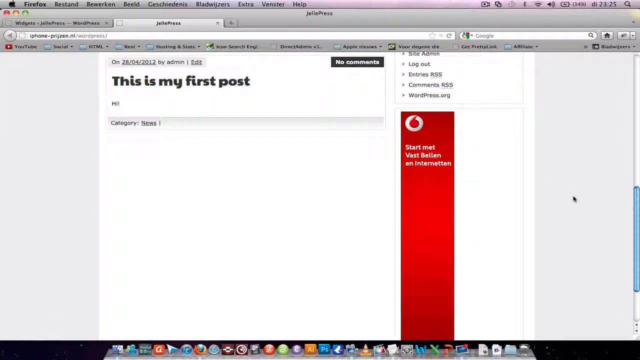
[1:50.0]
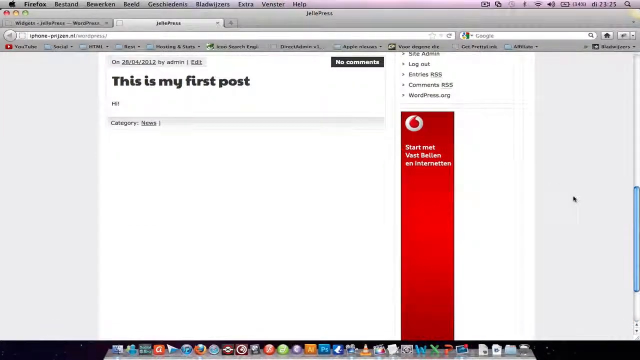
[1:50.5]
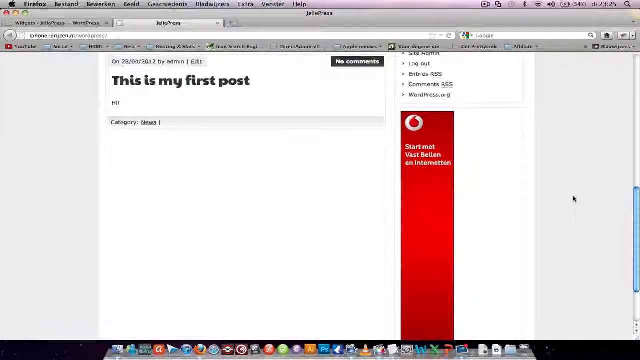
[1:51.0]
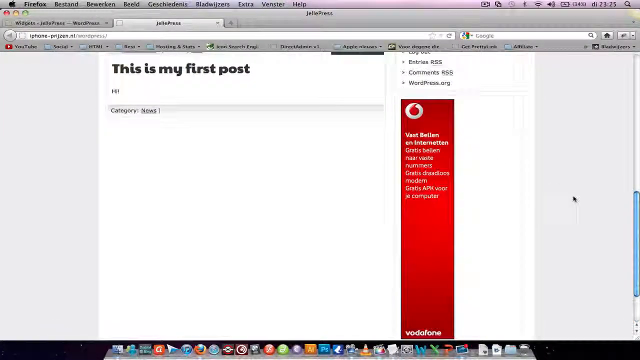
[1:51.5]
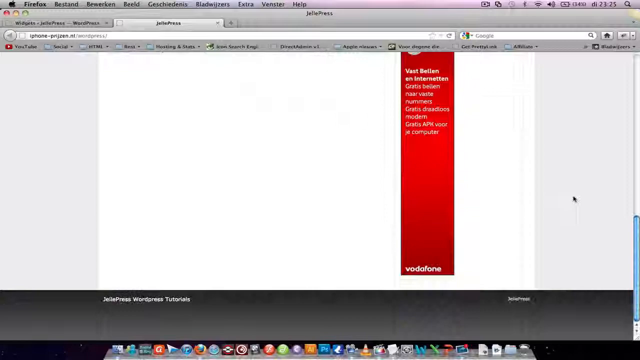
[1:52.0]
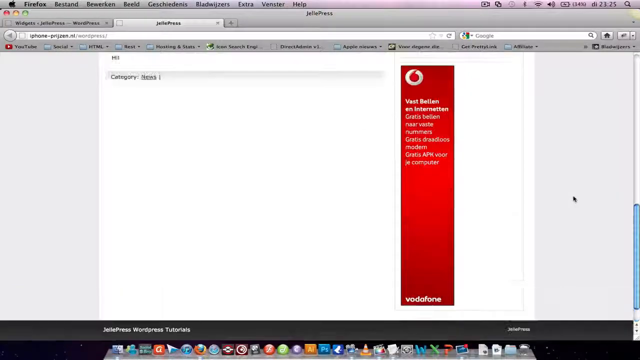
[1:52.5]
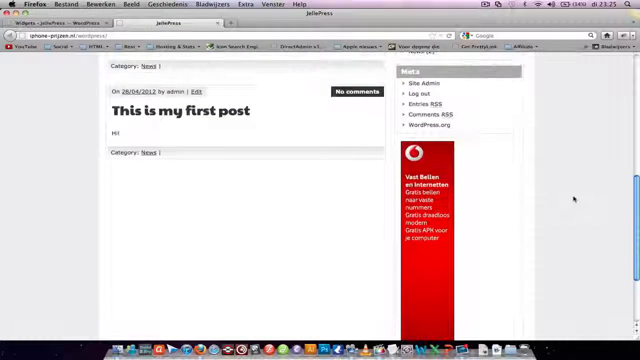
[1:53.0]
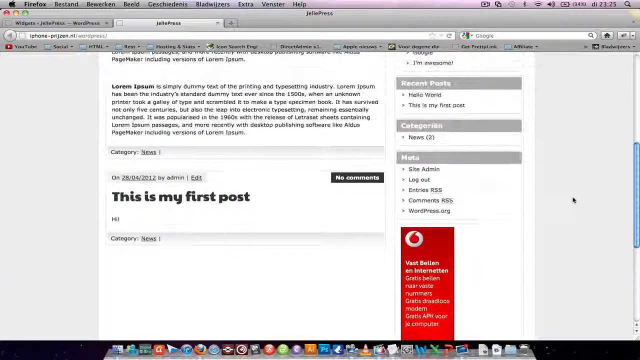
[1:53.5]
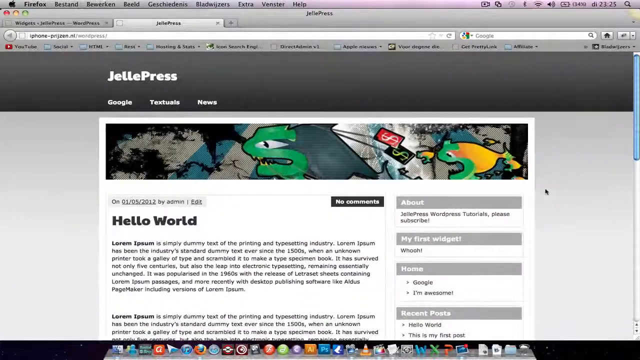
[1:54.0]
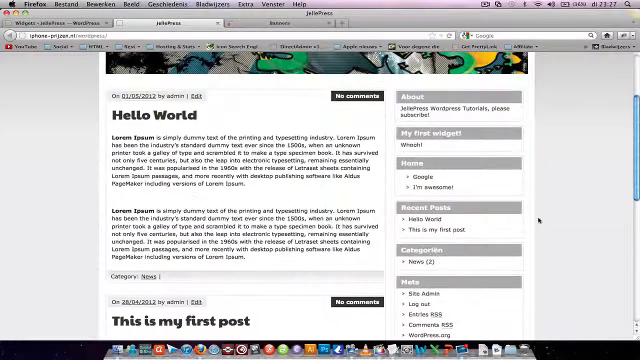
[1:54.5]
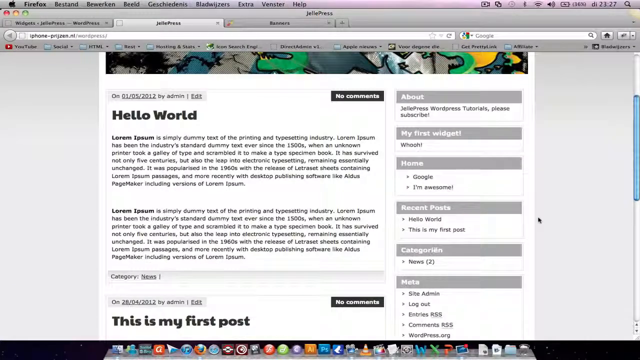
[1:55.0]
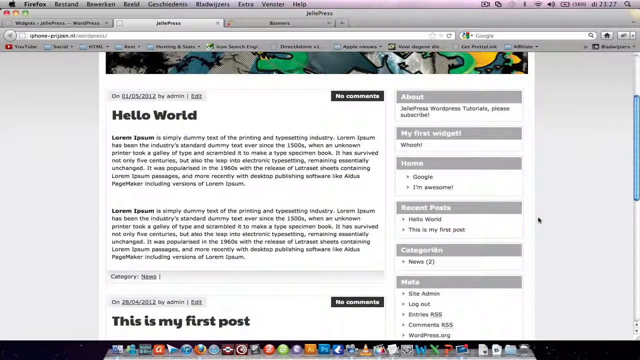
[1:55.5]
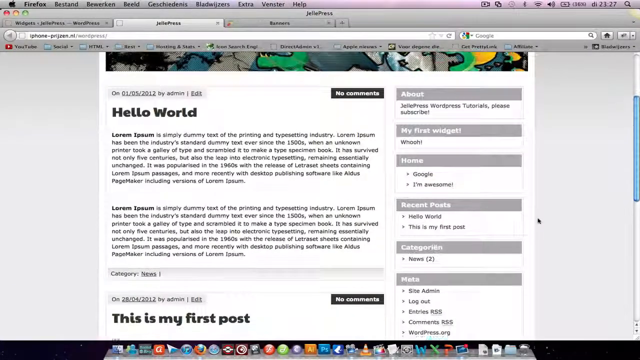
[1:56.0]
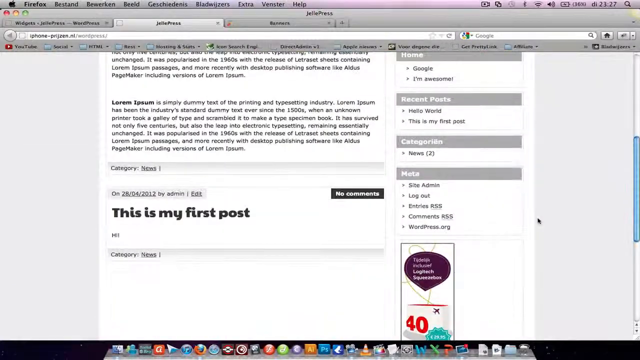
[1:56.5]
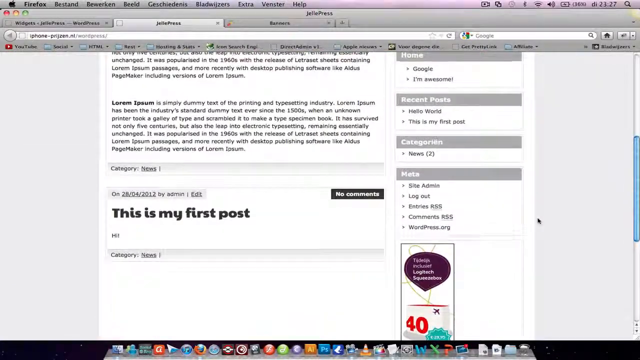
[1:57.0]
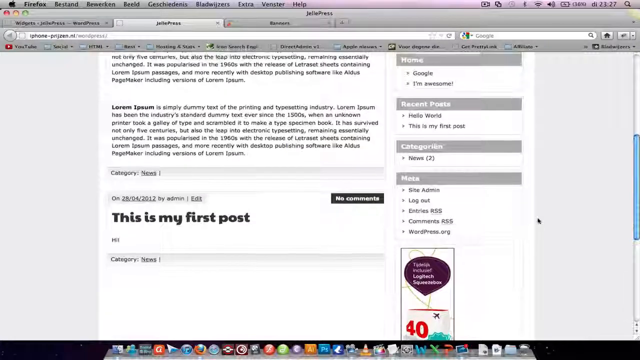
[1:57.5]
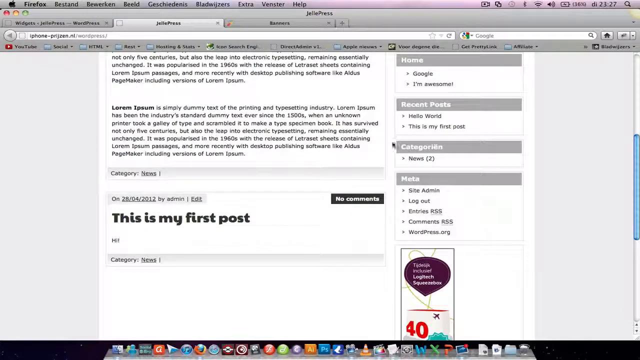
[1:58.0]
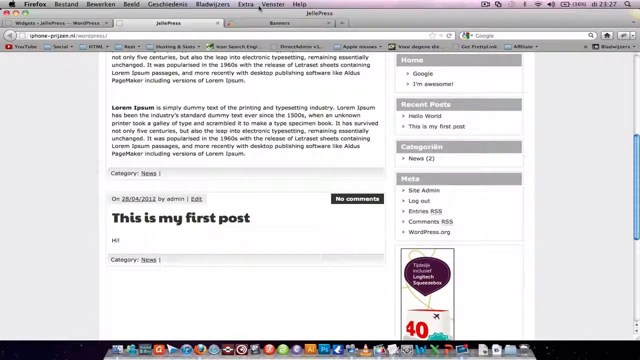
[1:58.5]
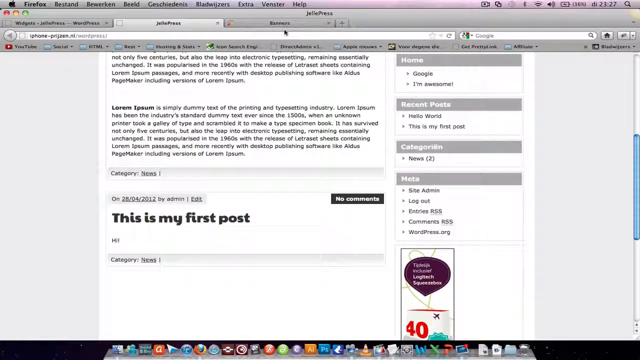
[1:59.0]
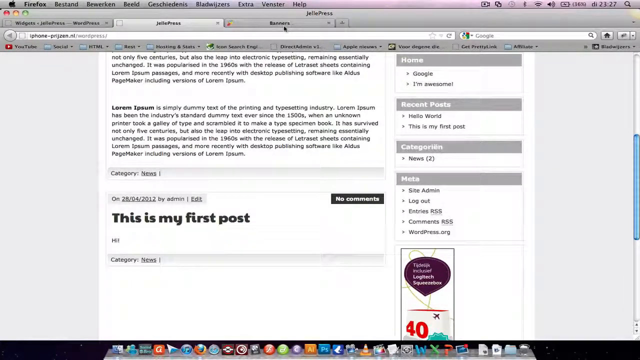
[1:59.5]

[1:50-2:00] The view goes up and down, exits WordPress, and goes to a new tab that says "banners"; how the banner page was created is not shown because the video skips over it. Besides the hello world message, the web page has sections on the side. About says "Jelle Press, WordPress tutorials, please subscribe"; below that, "My First Widget" says "Woo"; below that are "Home" and "Google", and below that "I'm Awesome". Next is "Recent Posts", listing "Hello World" and "this is my first post". Below that, "Categories" lists "News", with a circle around it. Below that, "Meta" lists "Site Admin", "Logout", "Entries RSS", "Comment RRS" and "WordPress.org".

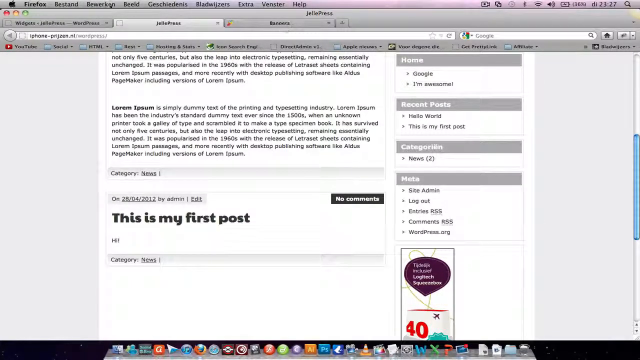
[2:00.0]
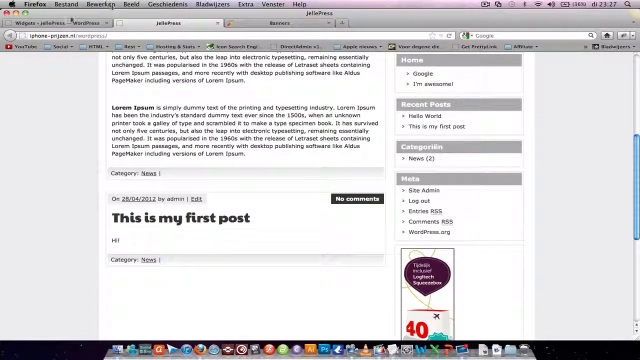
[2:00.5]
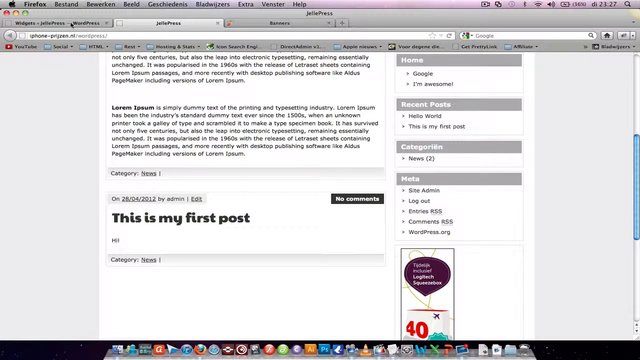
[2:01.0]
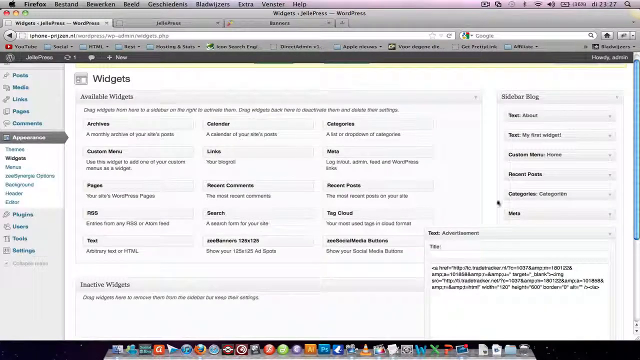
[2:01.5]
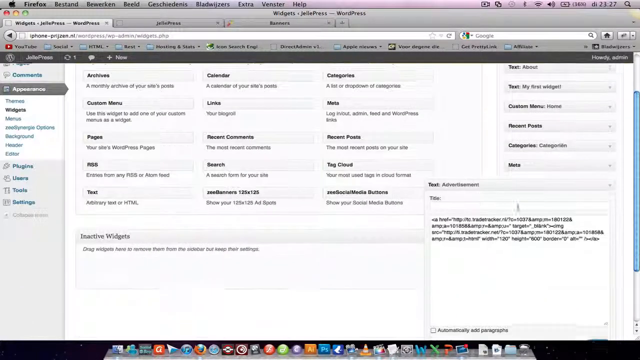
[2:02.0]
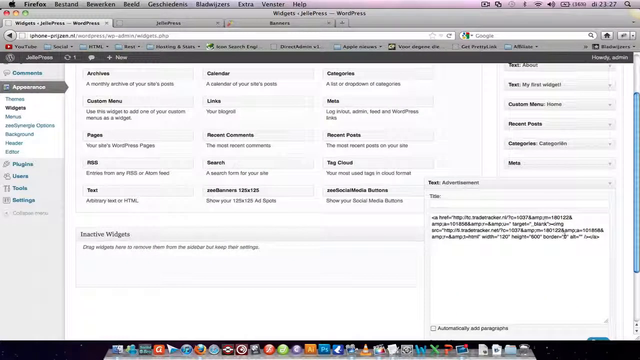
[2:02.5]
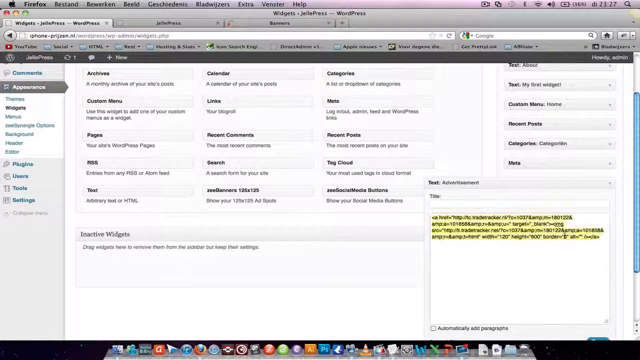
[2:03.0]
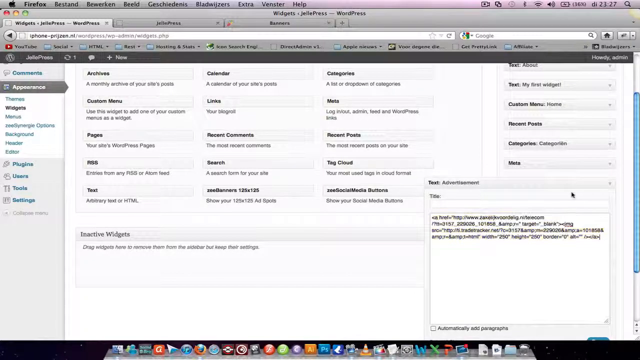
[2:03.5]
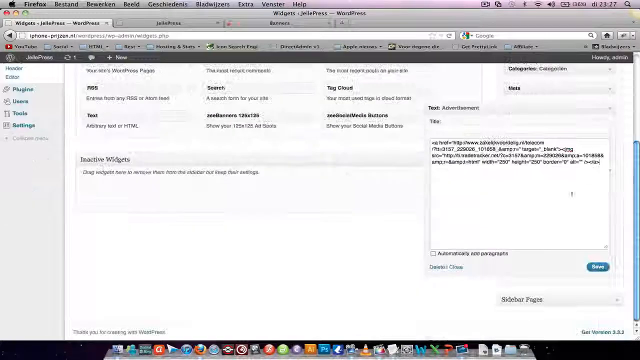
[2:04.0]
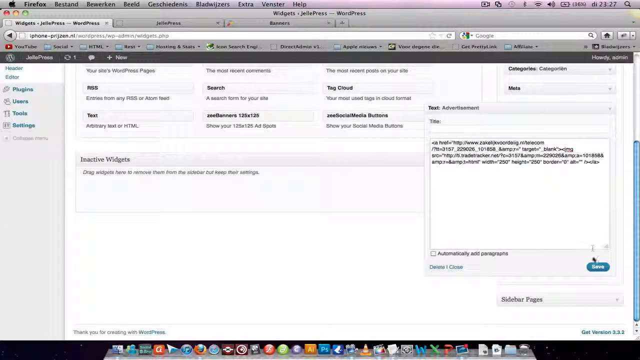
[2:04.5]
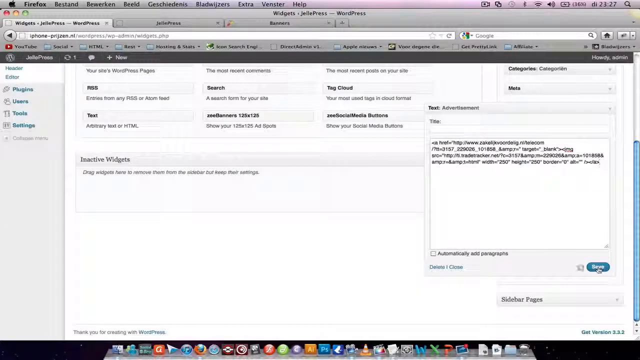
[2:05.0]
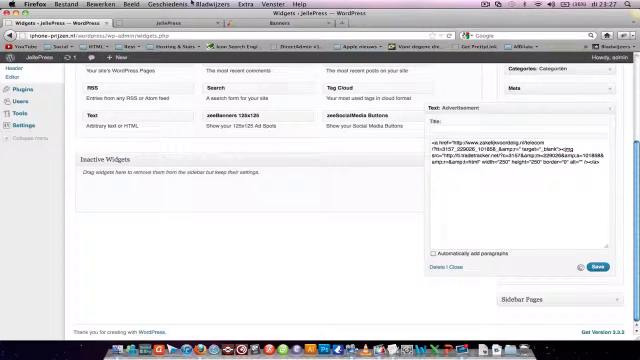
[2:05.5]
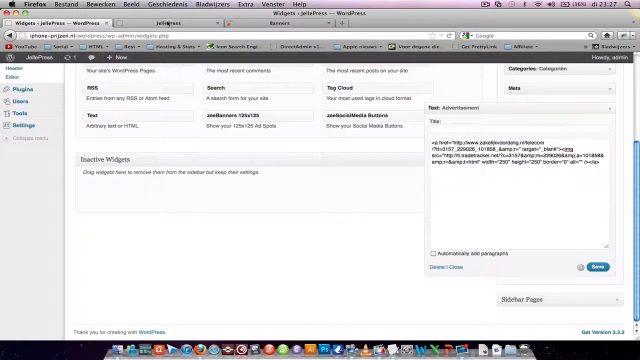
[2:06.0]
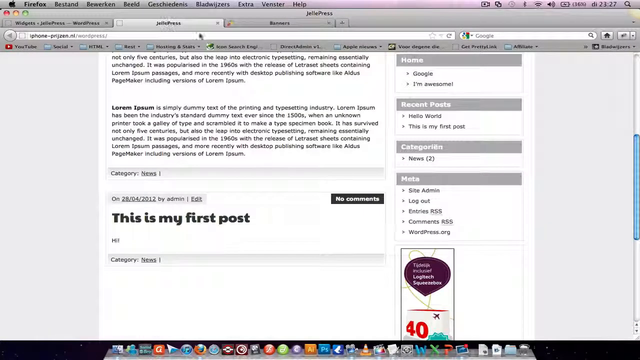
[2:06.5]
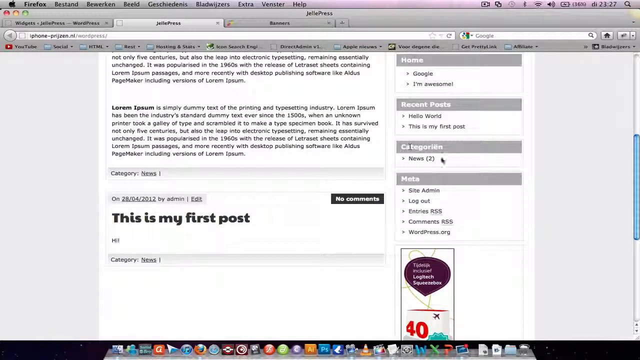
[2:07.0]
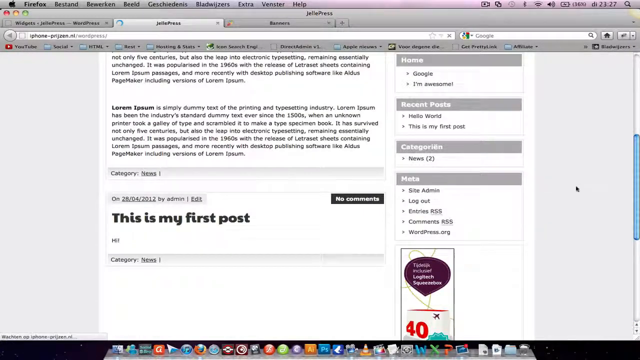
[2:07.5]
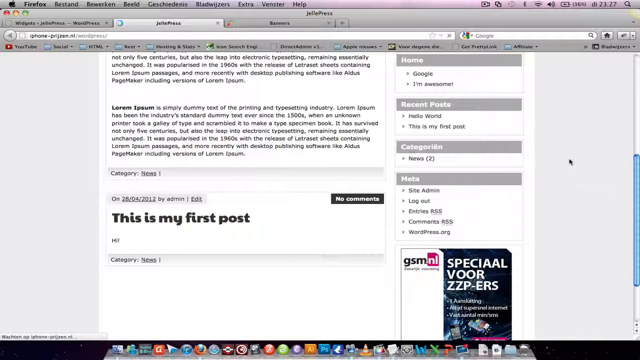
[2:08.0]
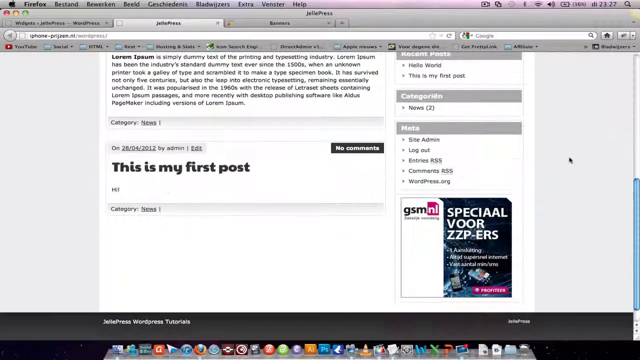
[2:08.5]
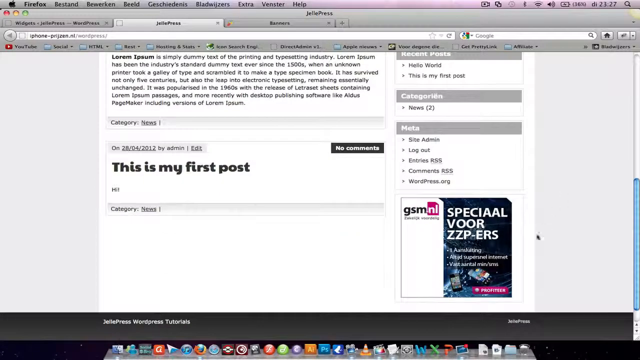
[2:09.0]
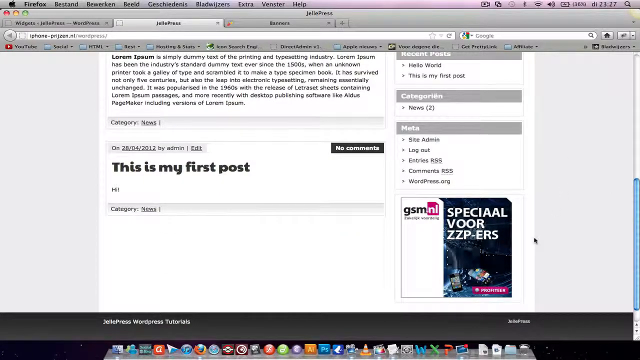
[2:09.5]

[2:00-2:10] The view goes to the WordPress widgets page, where a different code is pasted into the advertisement text box. The person saves and goes back to the Jelle Press WordPress page, where the advertisement has changed to advertise something different, relating to phones and in a foreign language, clearly due to the change on the widgets page. The new advertisement is square-shaped with two sides, one white and one blue, with some white words on it.